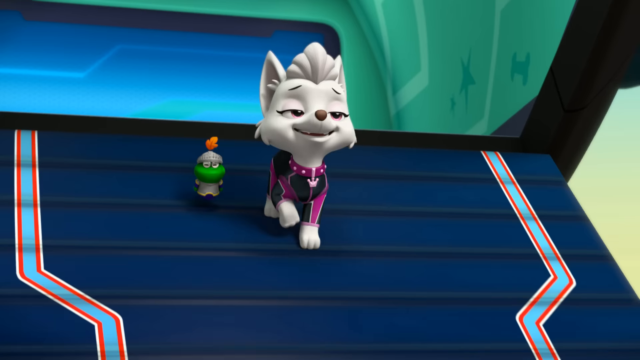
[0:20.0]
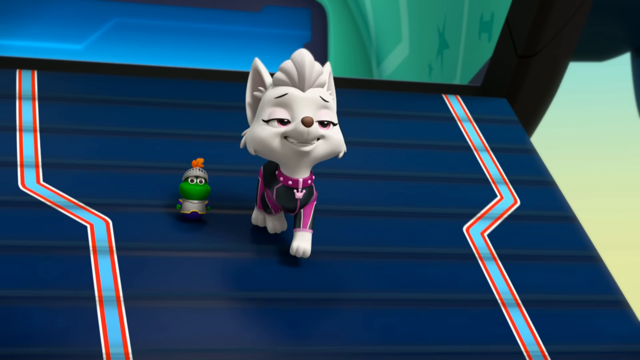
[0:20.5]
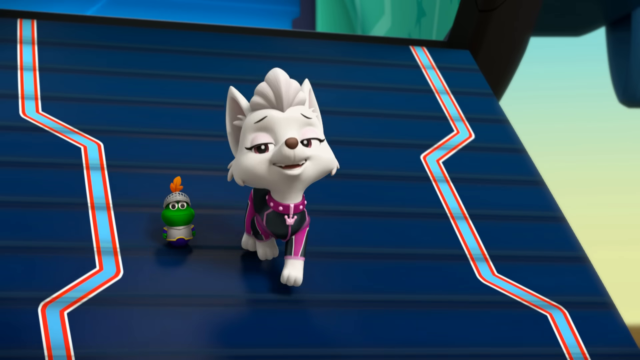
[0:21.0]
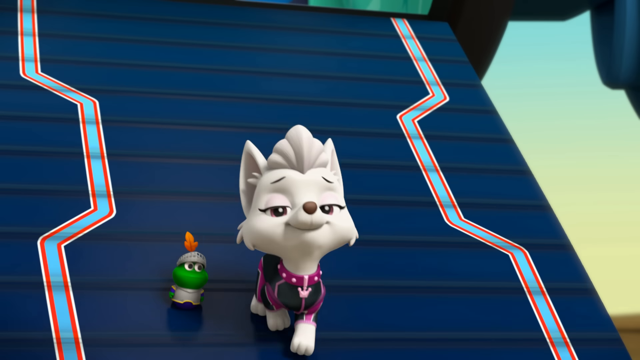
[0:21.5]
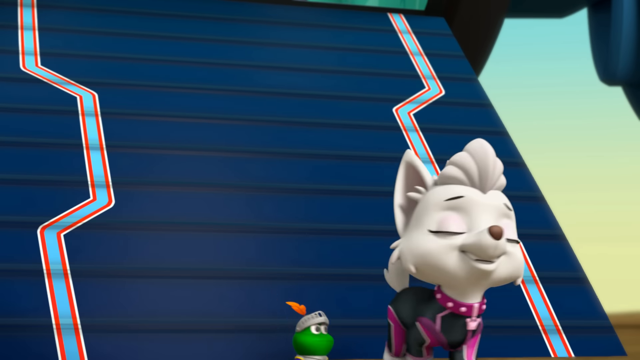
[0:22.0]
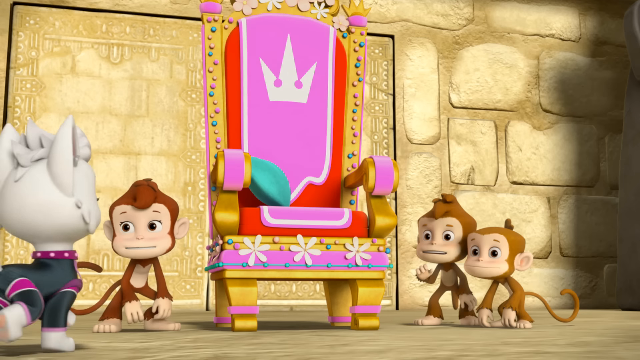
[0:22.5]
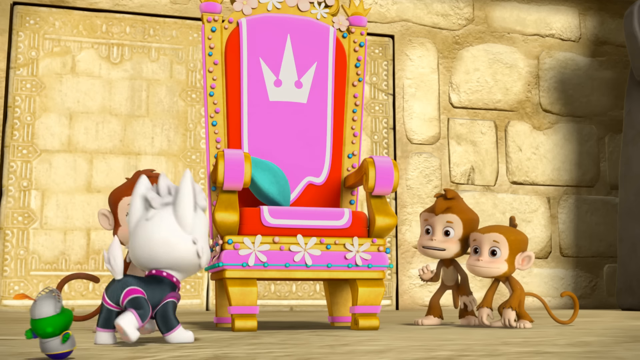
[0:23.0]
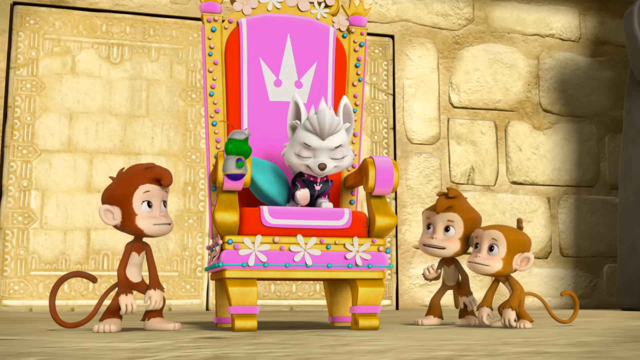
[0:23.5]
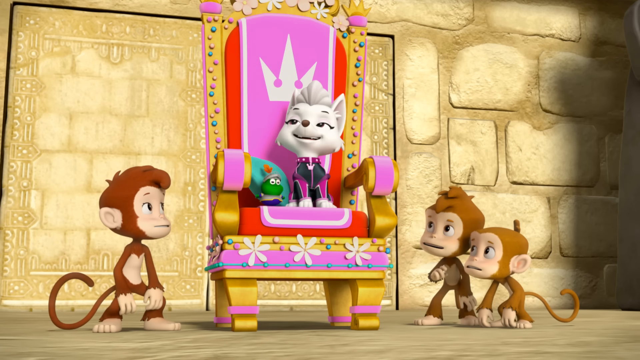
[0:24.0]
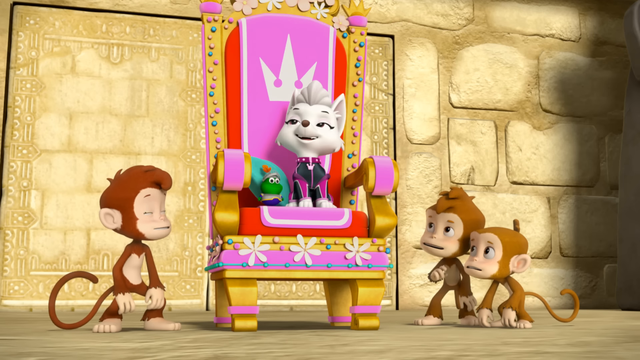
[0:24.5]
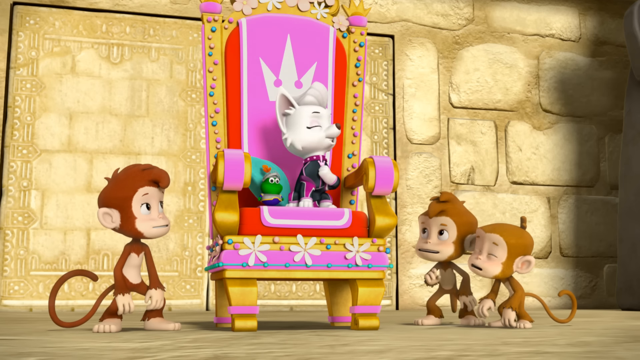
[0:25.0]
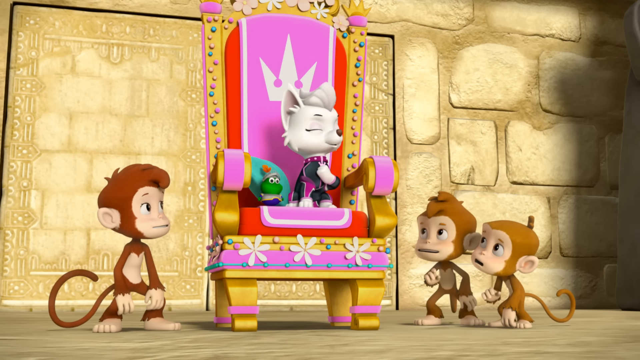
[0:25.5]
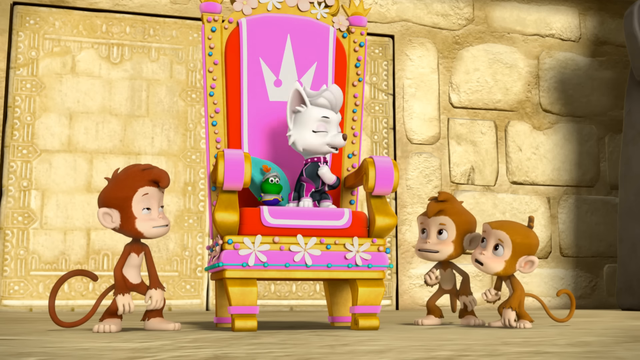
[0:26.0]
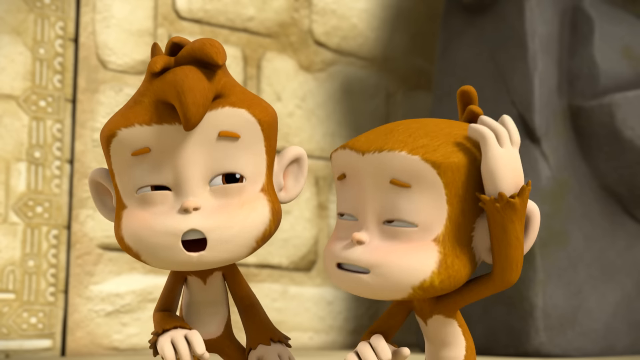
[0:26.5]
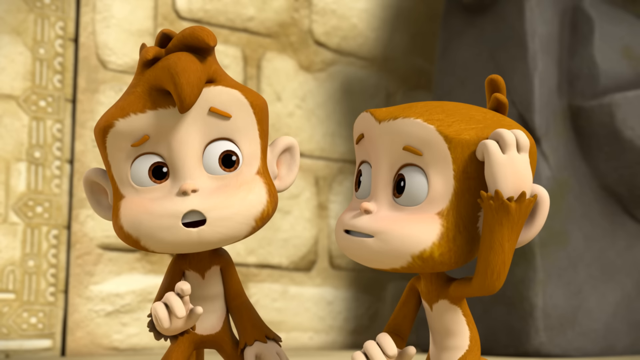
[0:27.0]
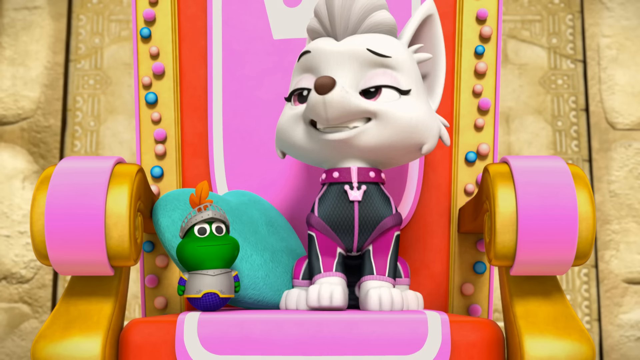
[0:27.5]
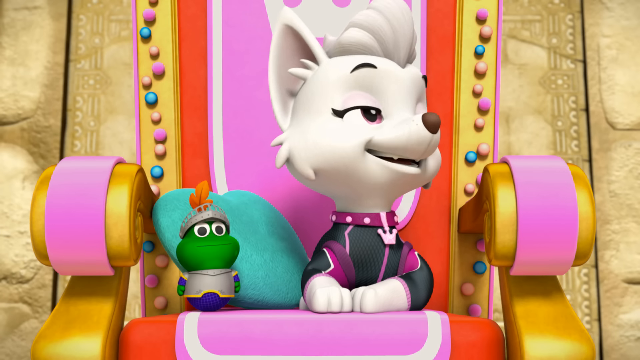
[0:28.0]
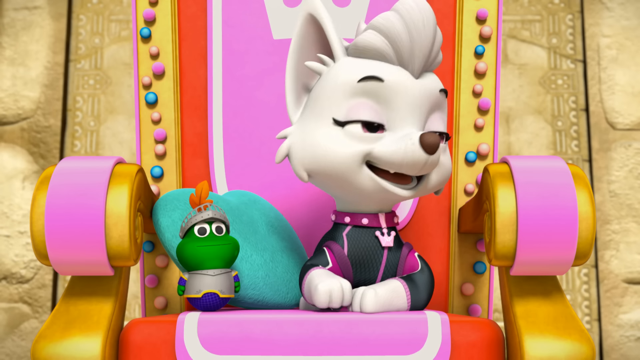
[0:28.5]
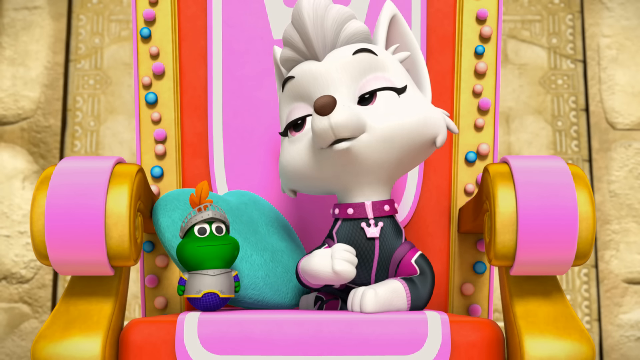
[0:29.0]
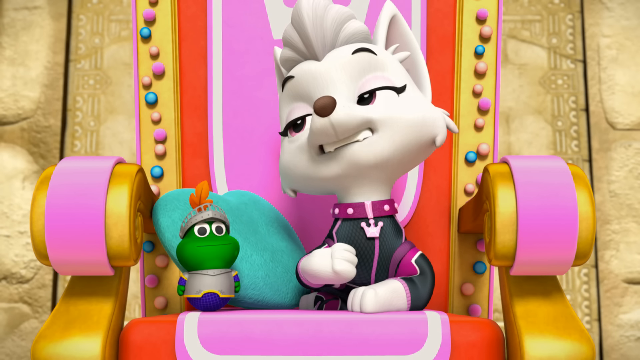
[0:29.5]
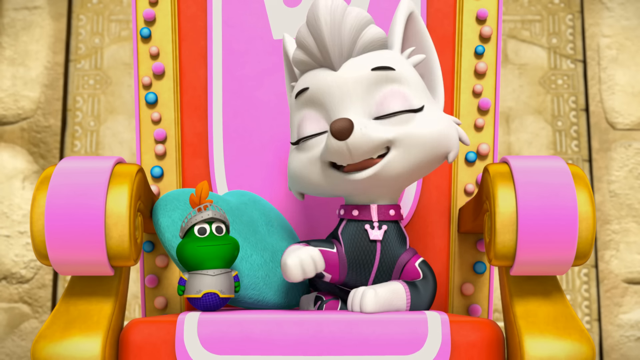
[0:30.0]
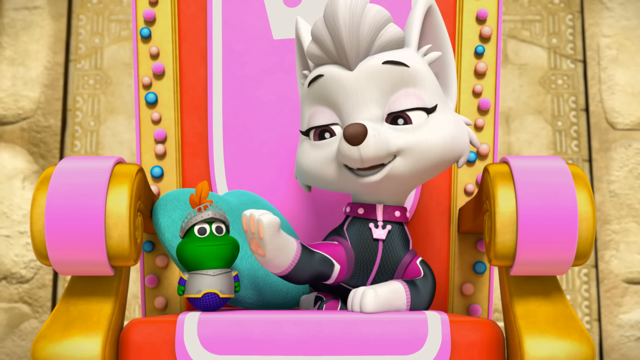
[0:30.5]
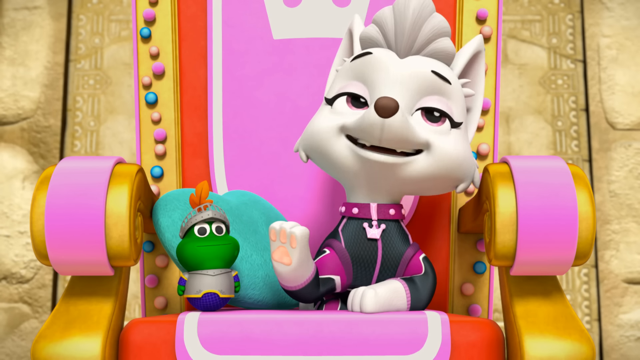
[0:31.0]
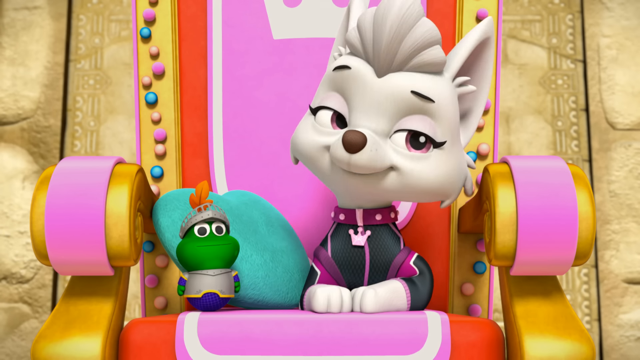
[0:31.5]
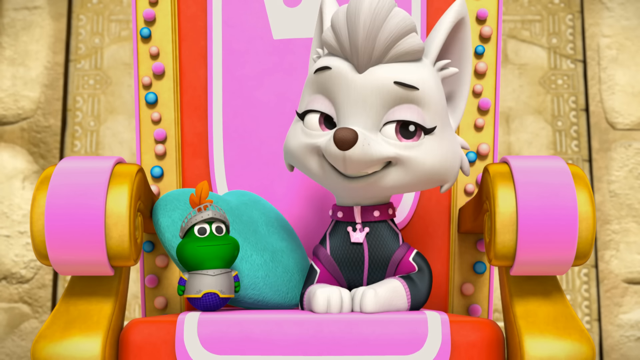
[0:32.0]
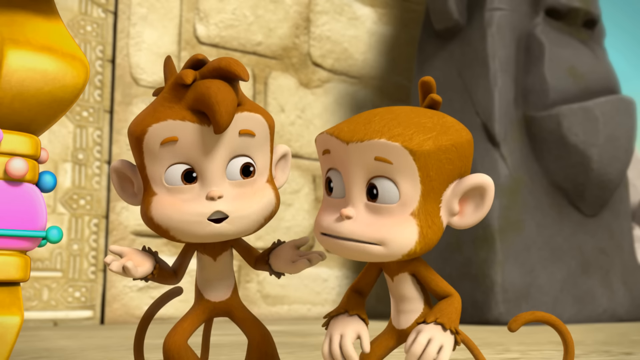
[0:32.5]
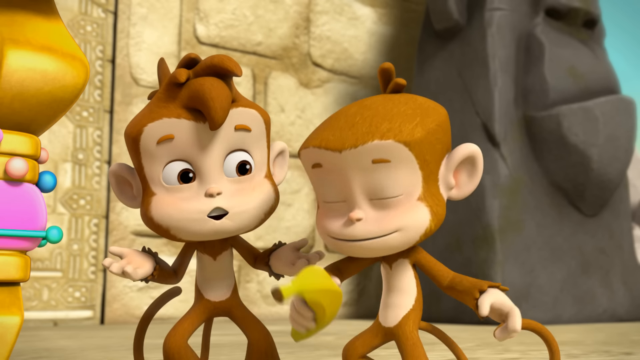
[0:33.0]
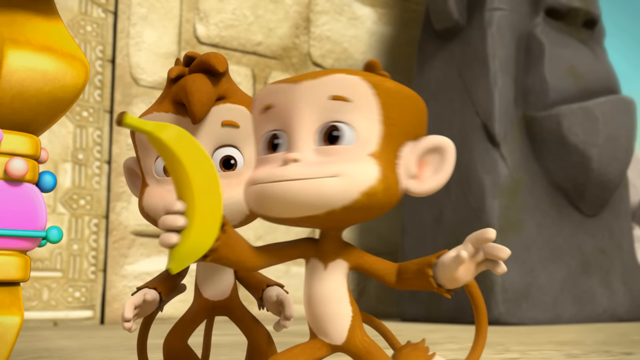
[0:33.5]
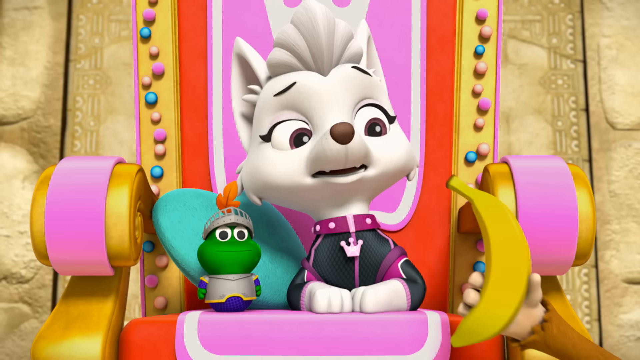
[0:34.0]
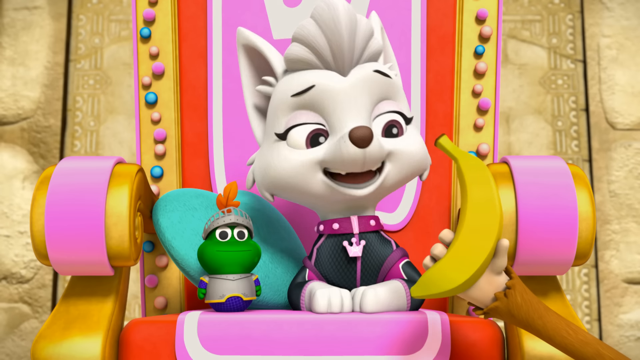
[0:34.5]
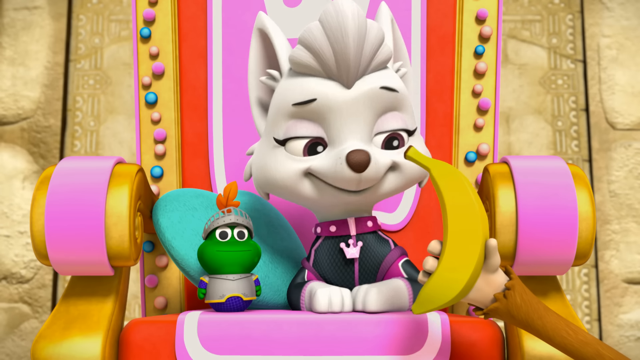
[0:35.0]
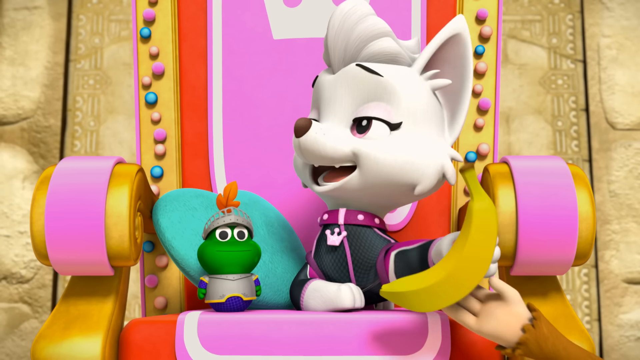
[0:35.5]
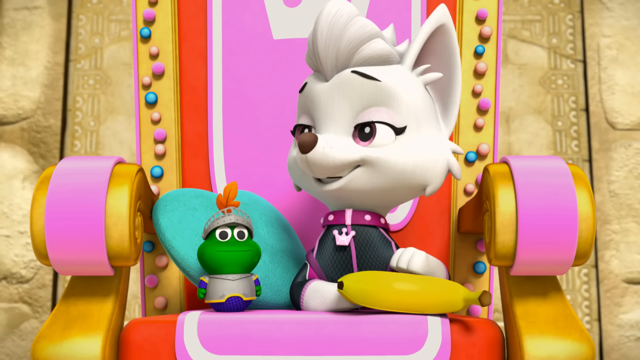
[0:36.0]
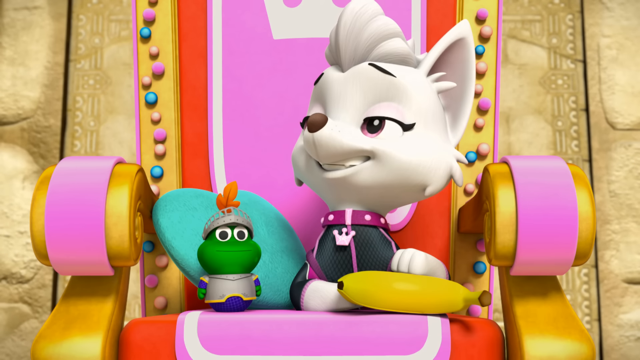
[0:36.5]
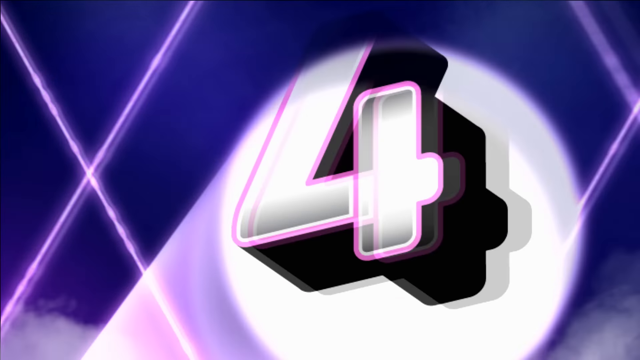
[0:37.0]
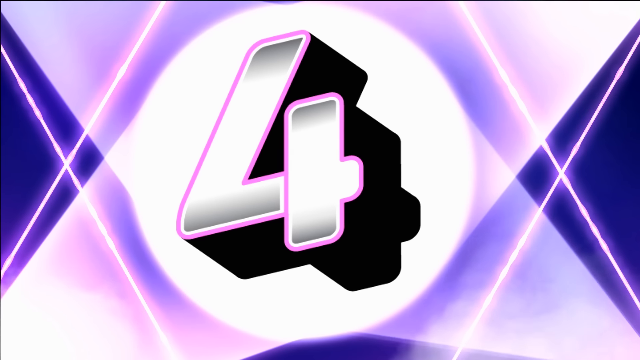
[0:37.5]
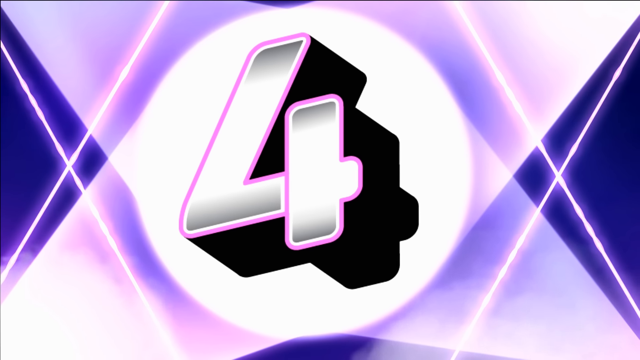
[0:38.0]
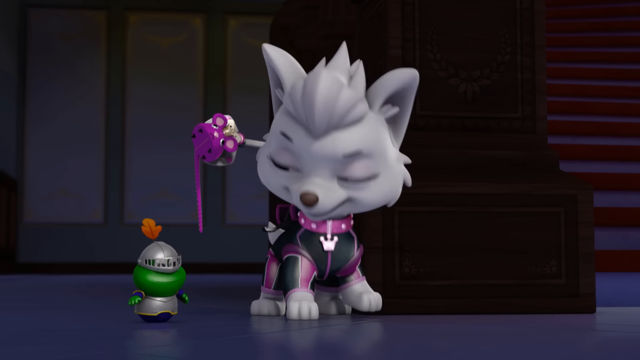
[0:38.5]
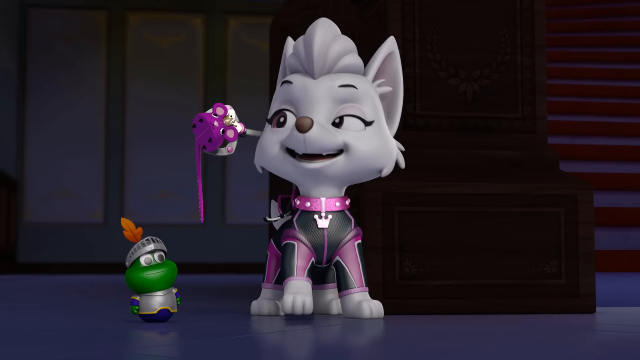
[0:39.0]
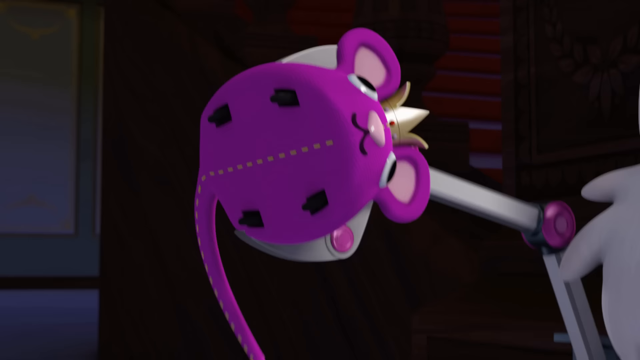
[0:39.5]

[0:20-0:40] The white dog, wearing a pink and black suit, walks down a blue slope out of what looks like a spaceship, with the small green creature in a suit of armour rolling along beside her. She jumps up onto a gold, pink and red throne decorated with daisy-like flowers. Two monkeys are to the bottom right of the throne and one monkey is to the bottom left; the monkeys are brown with large ears. Behind the monkeys and the throne is what looks like a stone wall. The white dog sits on the throne with her green creature and speaks to the monkeys, while one monkey scratches its head in confusion. One of the monkeys gives the white dog a banana. The number four is then shown illuminated in an animated spotlight.